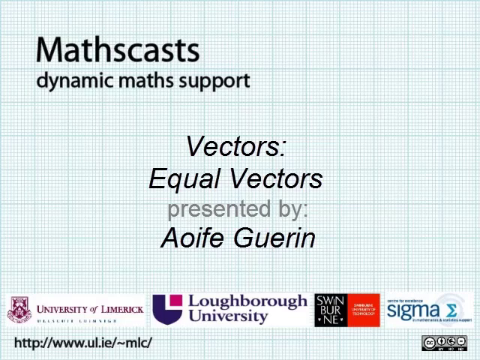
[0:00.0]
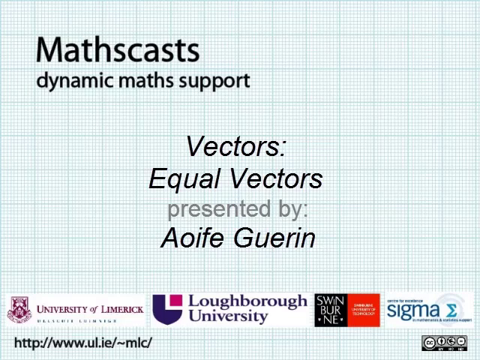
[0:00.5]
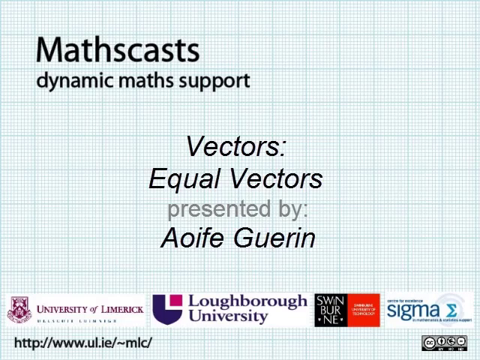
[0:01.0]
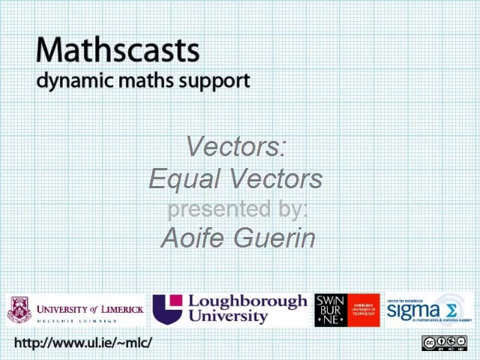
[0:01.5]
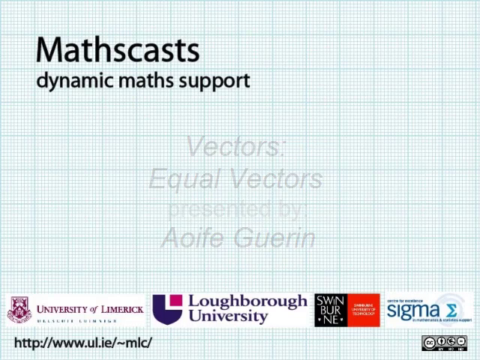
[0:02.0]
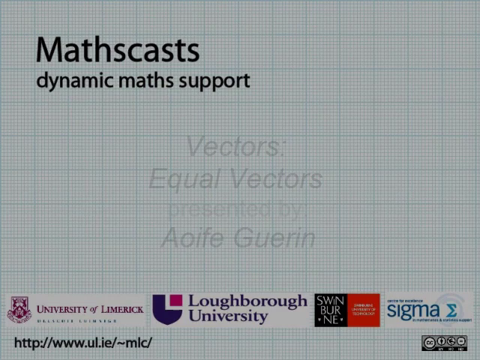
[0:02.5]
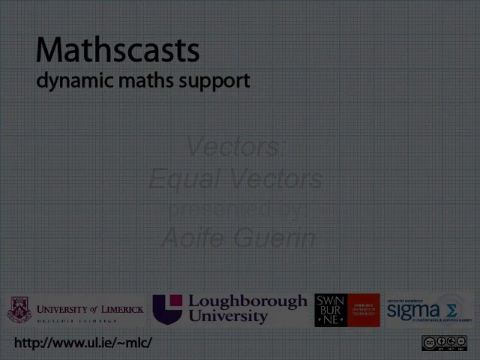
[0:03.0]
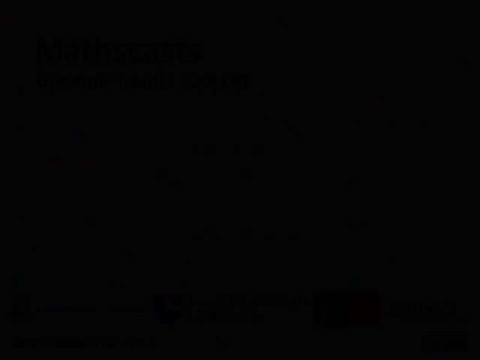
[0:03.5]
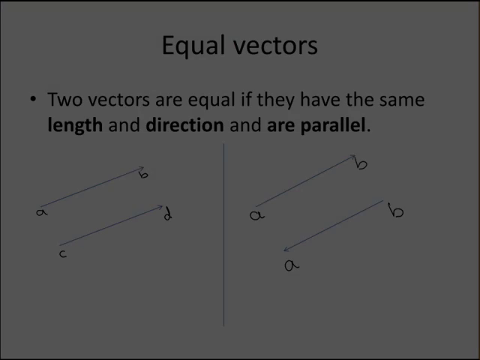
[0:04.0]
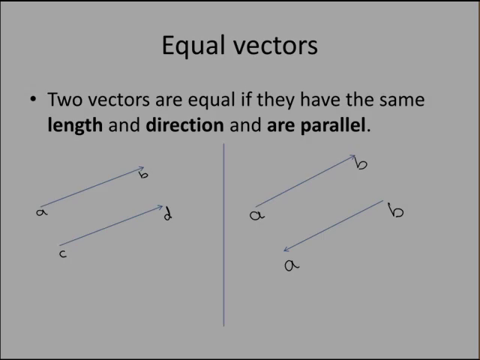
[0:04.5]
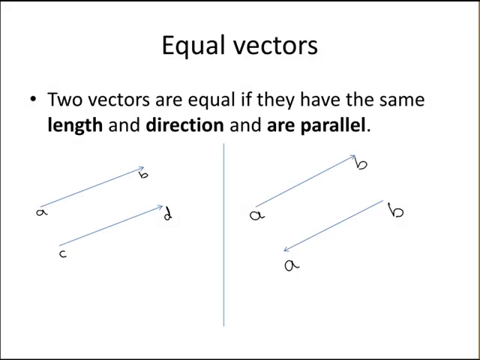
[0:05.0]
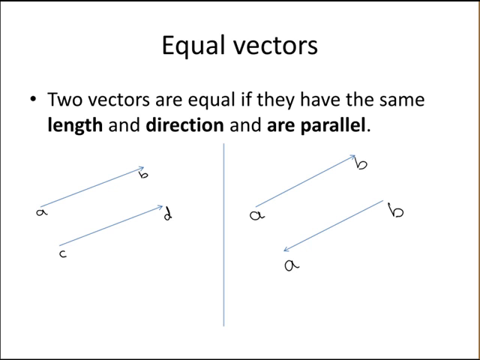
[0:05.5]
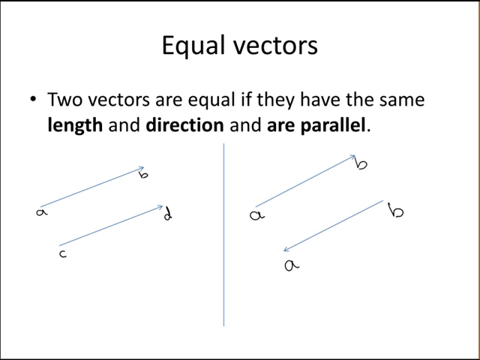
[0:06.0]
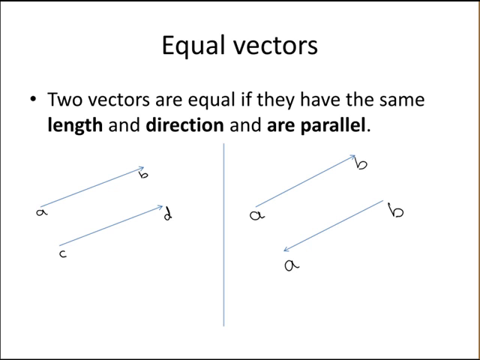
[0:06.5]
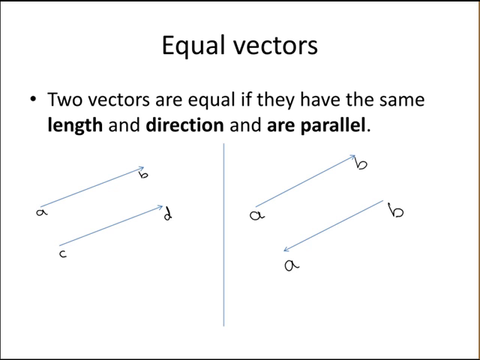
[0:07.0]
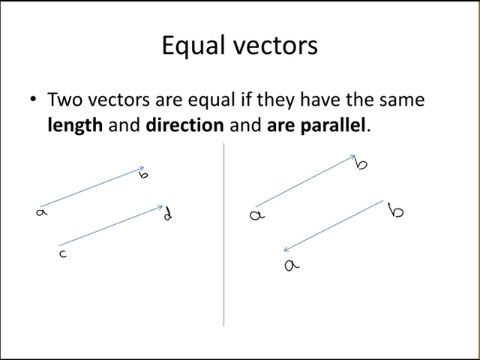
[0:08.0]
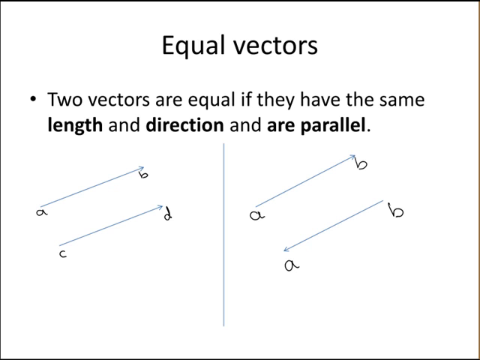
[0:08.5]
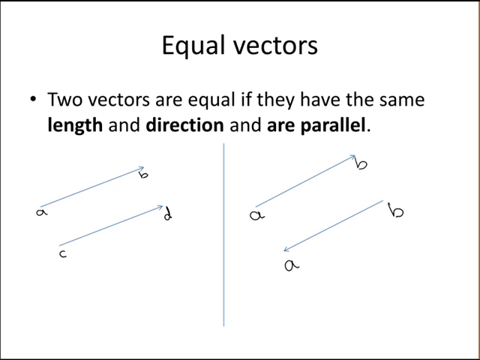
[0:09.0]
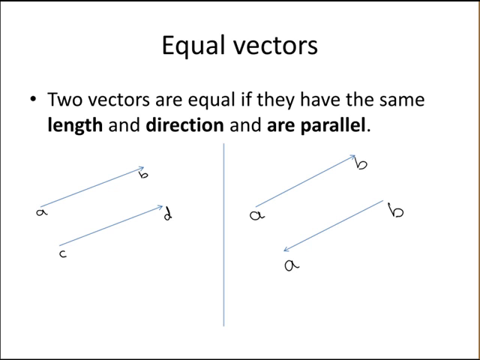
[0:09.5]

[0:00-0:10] The video opens on a background that looks like white and blue graphing paper. In the top left-hand corner, a heading in bold black text reads "MathsCasts Dynamic Maths Support." In the middle of the page it says "Vectors, Equal Vectors, presented by Aoife Guerin." At the bottom are the logos for the University of Limerick, Loughborough University, Swinburne, and Sigma. The screen then changes to a white background with a centered heading at the top reading "equal vectors." Beneath it, a bullet point says "two vectors are equal if they have the same length and direction and are parallel," with the words "length," "direction," and "are parallel" in bold. Below that, a thin black line runs down the middle of the page. On its left are two dark blue parallel lines, both lower on the left and higher on the right, pointing upwards. The top line is labelled A at the front and B at the end, and the bottom line is labelled C at the front and D at the end. Both have arrowheads on their right ends pointing up and to the right. To the right of the center vertical line are two more parallel lines with the same positioning, lower on the left and higher on the right; the top one is labelled A and B, and the bottom one is also labelled A and B. Here the top line's arrowhead is on its right side pointing to the right, while the bottom line's arrowhead is on its left side pointing to the left.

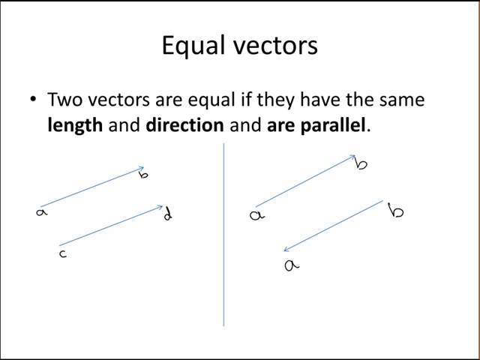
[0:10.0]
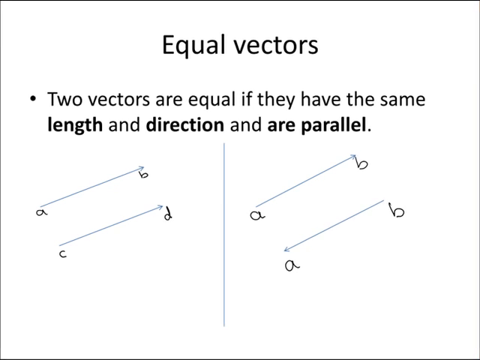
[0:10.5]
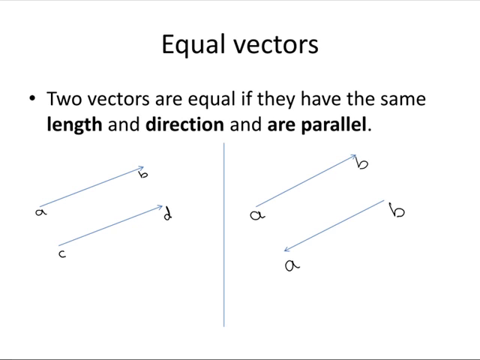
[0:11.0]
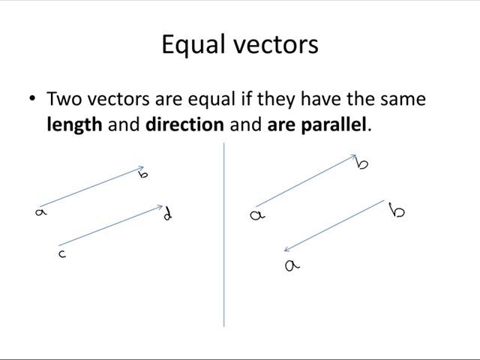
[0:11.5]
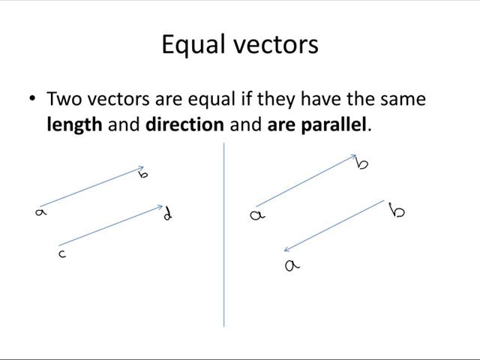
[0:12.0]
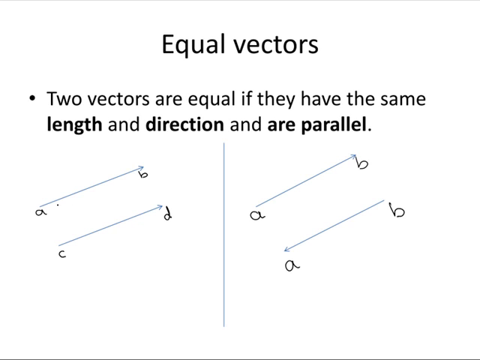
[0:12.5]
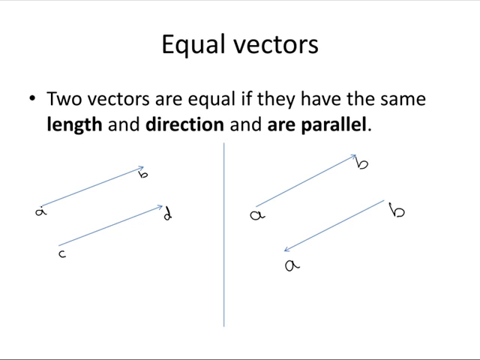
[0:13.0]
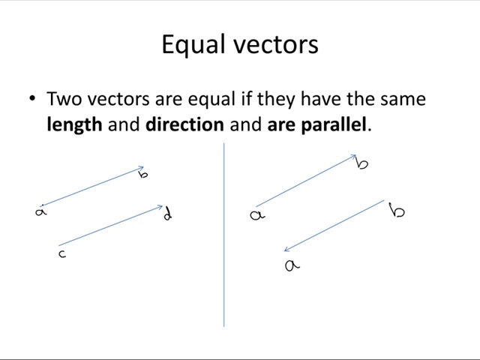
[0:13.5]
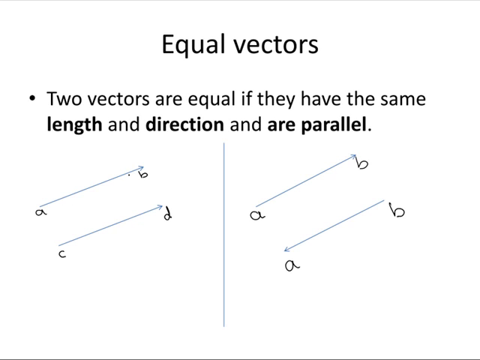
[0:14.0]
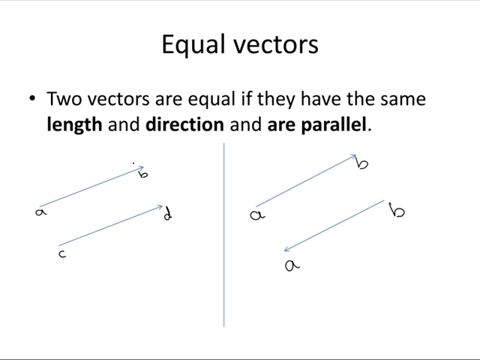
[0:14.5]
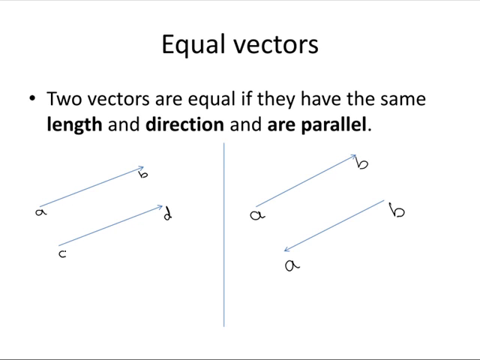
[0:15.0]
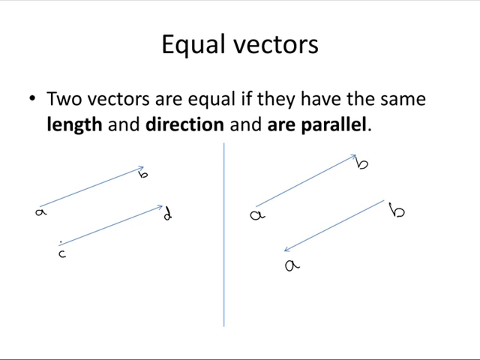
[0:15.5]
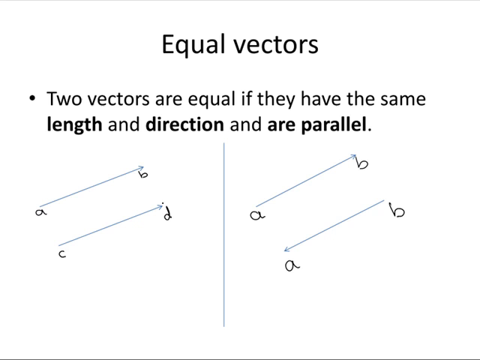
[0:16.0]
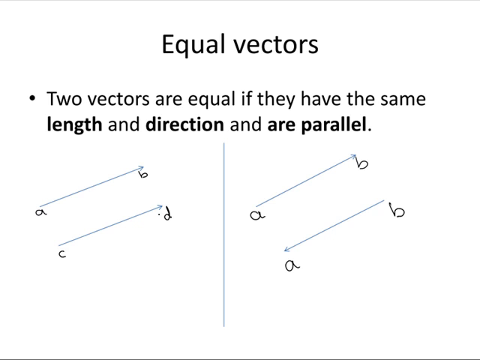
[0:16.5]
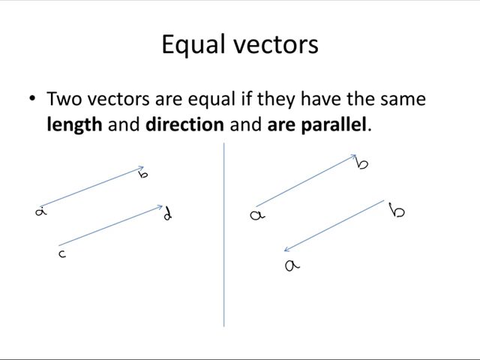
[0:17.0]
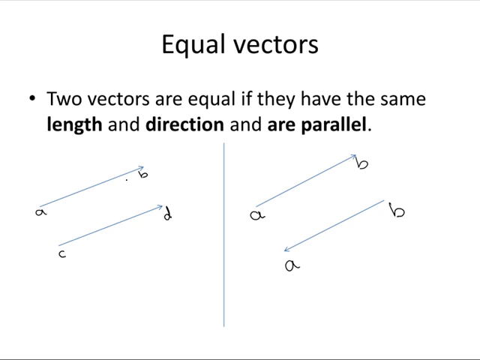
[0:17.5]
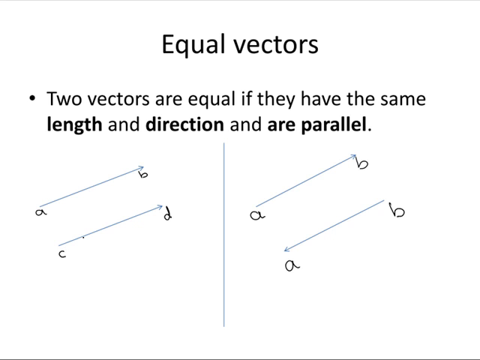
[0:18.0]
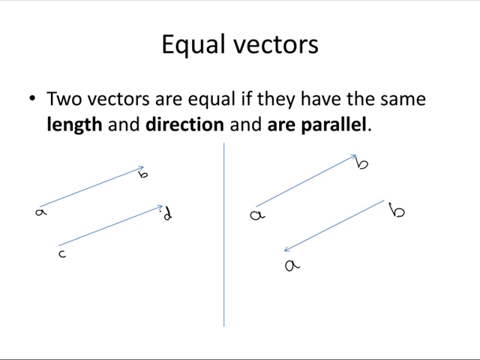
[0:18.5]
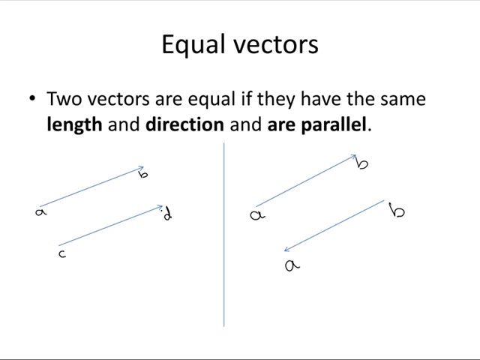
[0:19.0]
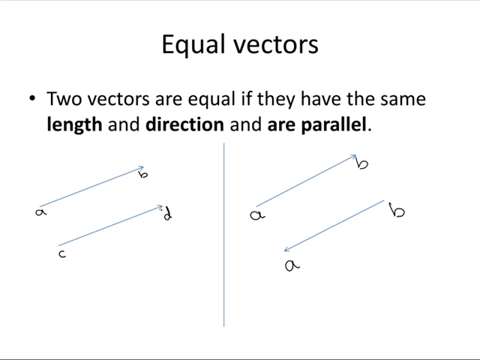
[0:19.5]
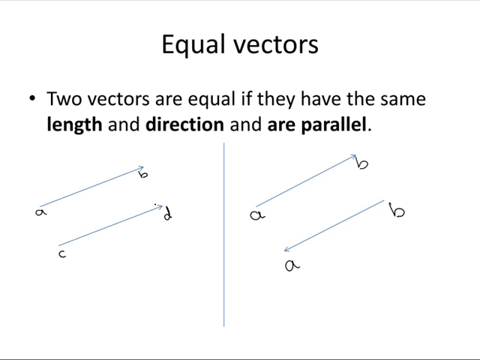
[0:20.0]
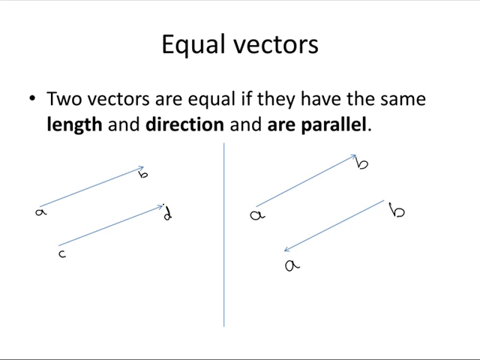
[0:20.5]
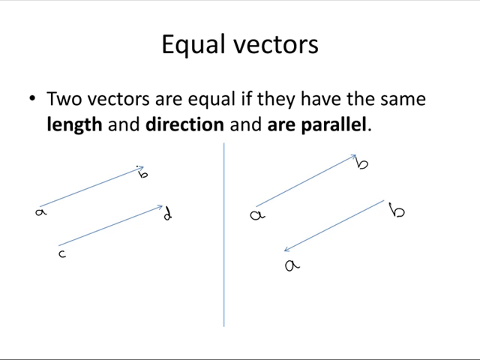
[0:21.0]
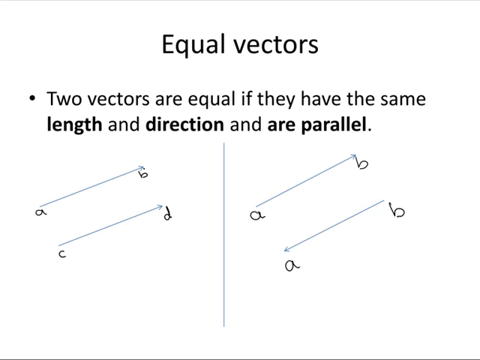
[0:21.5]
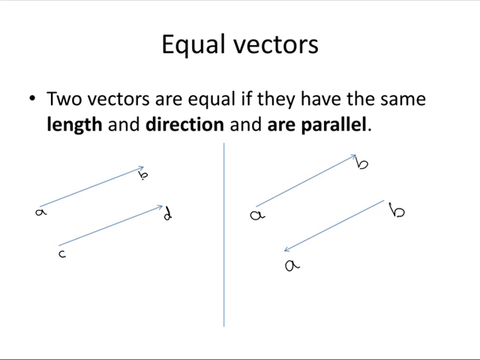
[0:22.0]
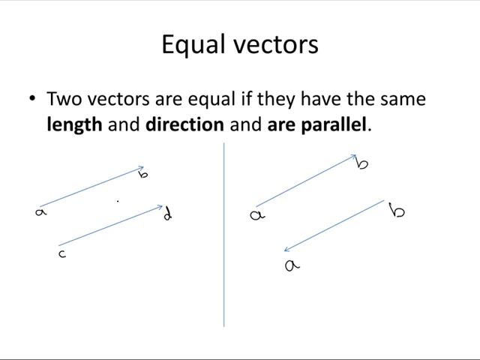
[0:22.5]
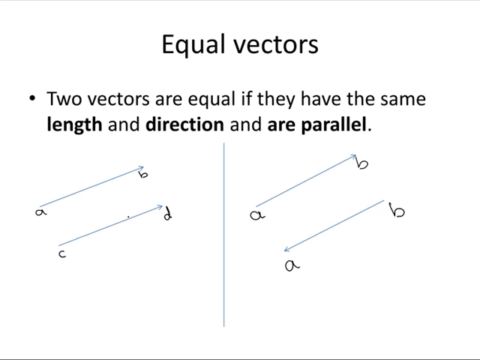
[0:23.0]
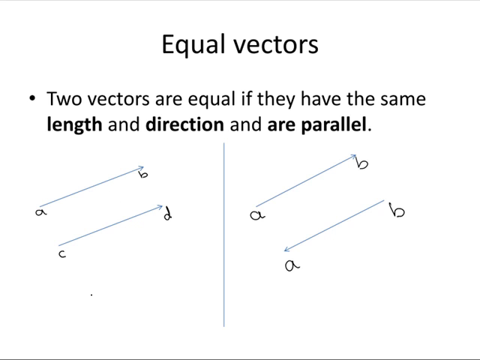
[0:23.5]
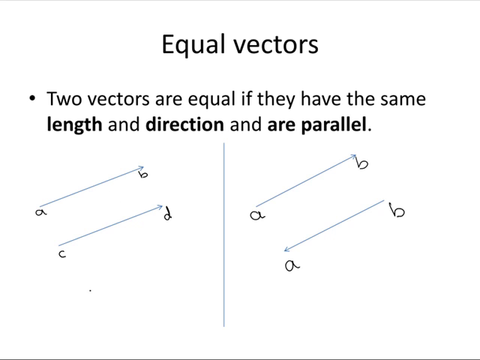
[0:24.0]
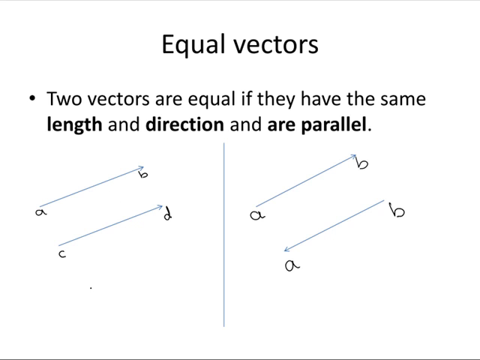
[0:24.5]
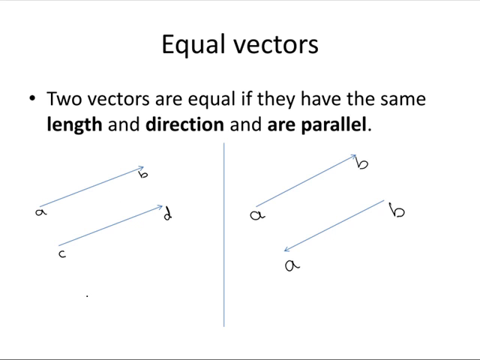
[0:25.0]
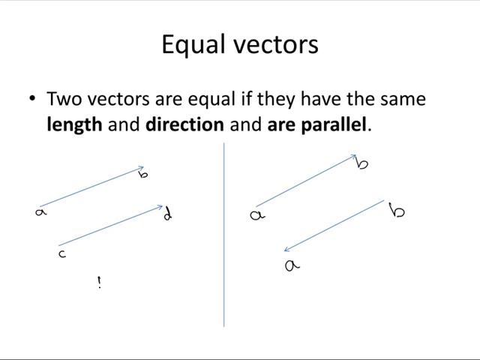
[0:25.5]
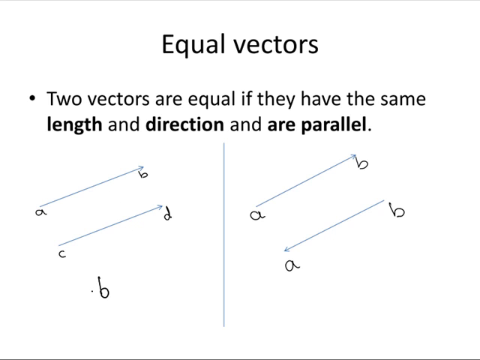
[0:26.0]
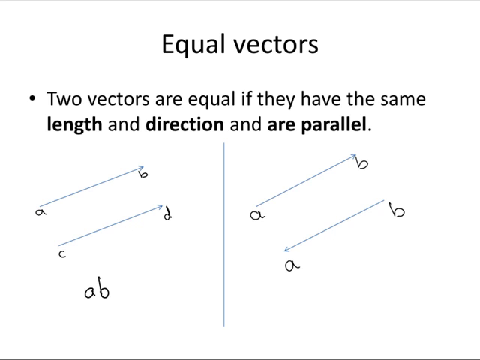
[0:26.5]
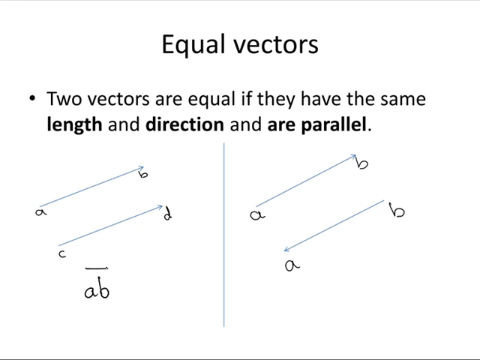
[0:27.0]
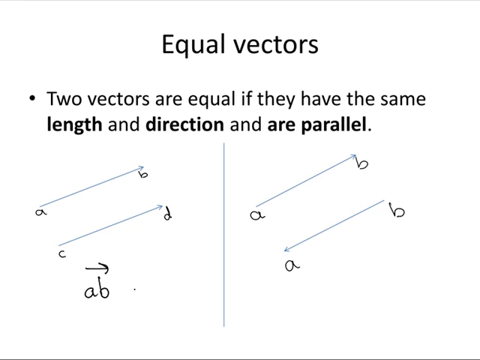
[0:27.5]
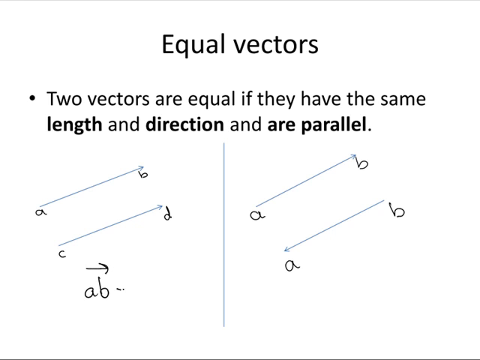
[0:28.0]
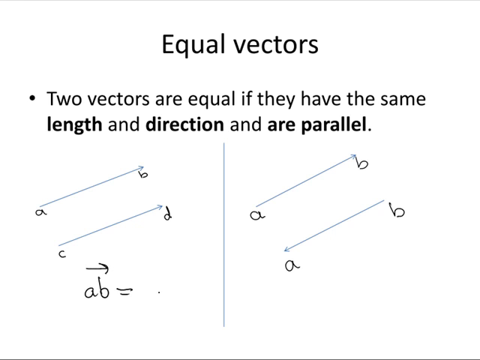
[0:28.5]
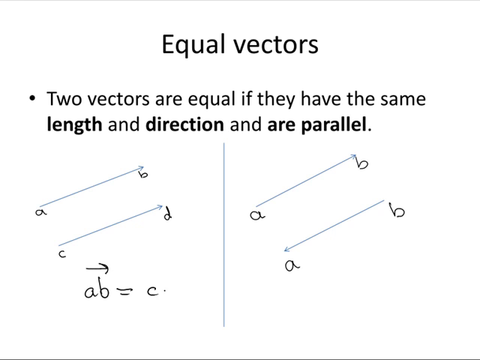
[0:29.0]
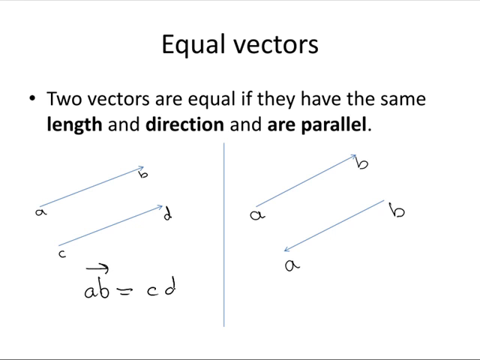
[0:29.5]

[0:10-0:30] A white slide shows the heading "equal vectors" in large bold black text at the top center. Beneath it, a bullet point says "two vectors are equal if they have the same length and direction and are parallel," with "length," "direction," and "are parallel" in bold. A thin black vertical line runs down the middle of the screen. On the left are two parallel lines, lower on the left and inclined so the right side is much higher; the top line is labelled A at the front and B at the end, the second C and D, and both have arrowheads on their right ends facing to the right and upwards. On the right side are two more parallel lines, both labelled A and B; the top one has an arrowhead on its right side pointing to the right and upwards, and the bottom one has an arrowhead on its left side pointing downwards. The cursor hovers over the two parallel lines on the left. Then, beneath the bottom line, writing appears in what looks like black marker: an arrow pointing to the right is drawn, and underneath it "ab = cd" is written.